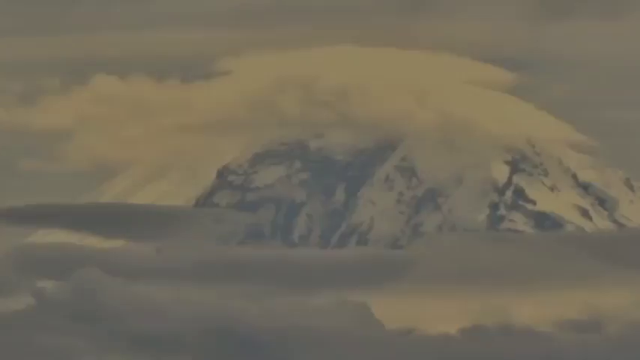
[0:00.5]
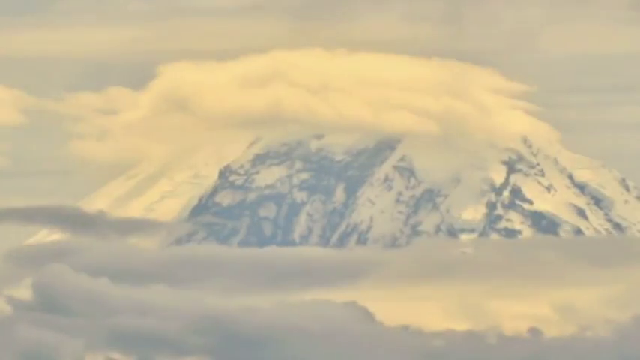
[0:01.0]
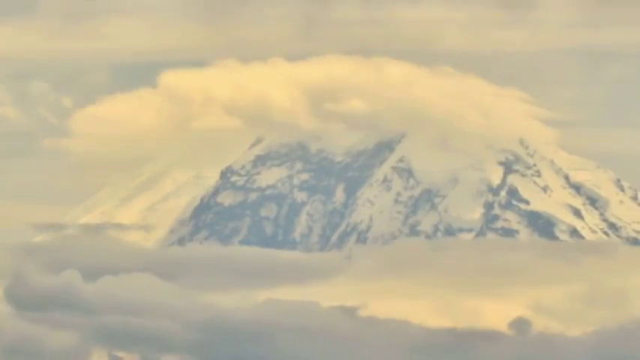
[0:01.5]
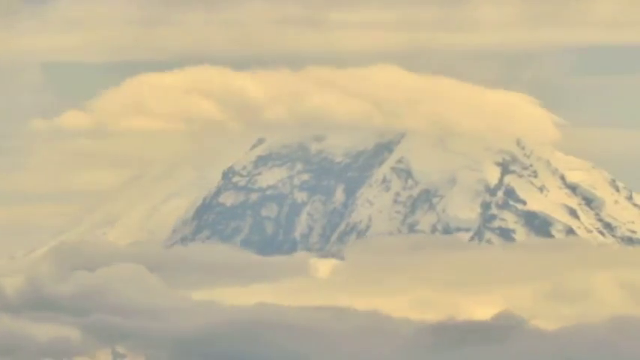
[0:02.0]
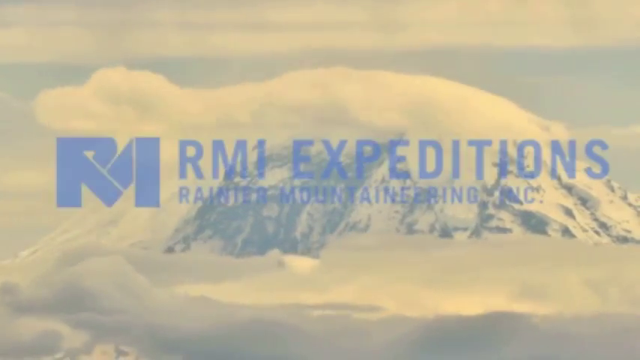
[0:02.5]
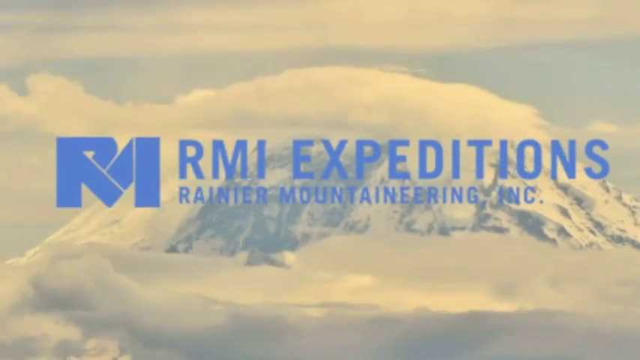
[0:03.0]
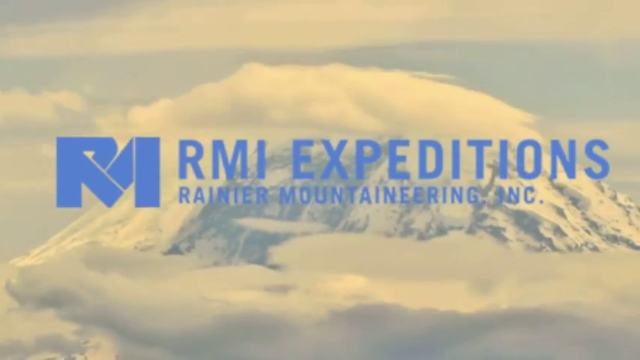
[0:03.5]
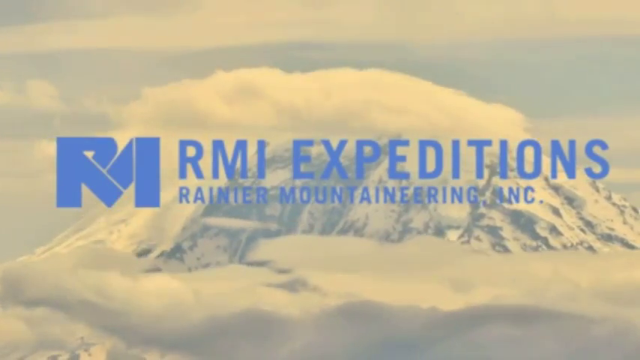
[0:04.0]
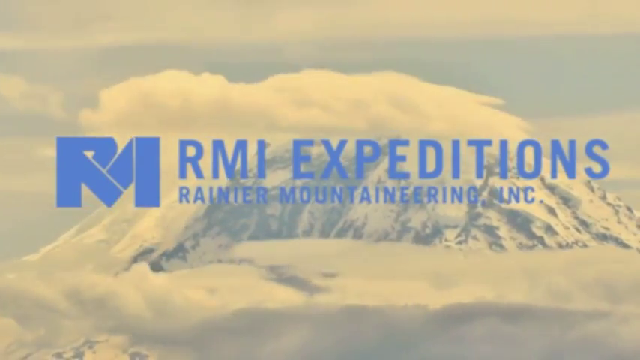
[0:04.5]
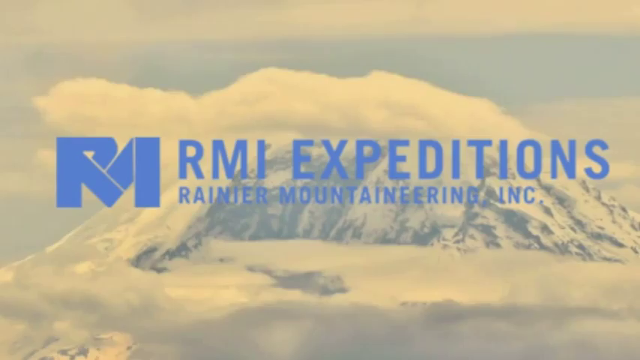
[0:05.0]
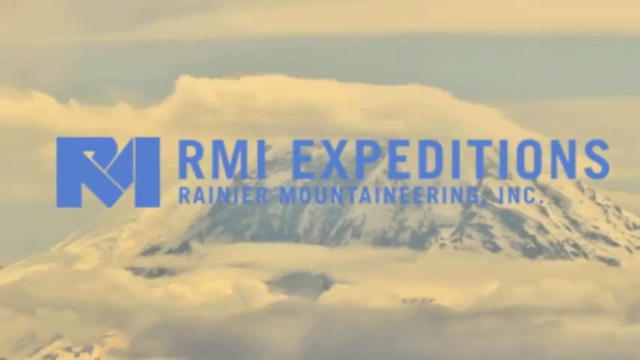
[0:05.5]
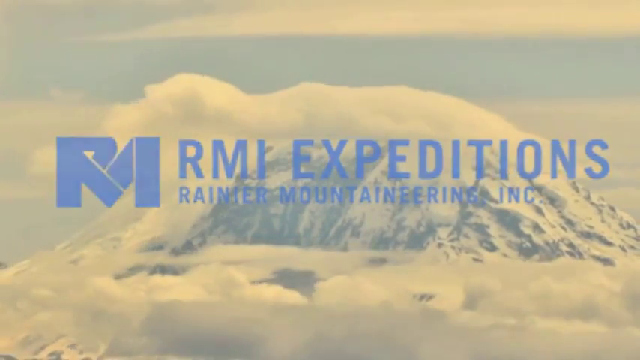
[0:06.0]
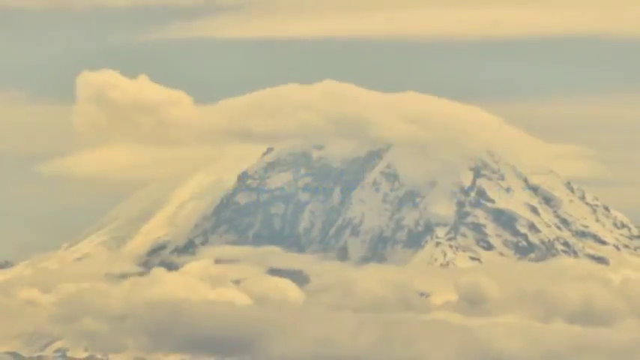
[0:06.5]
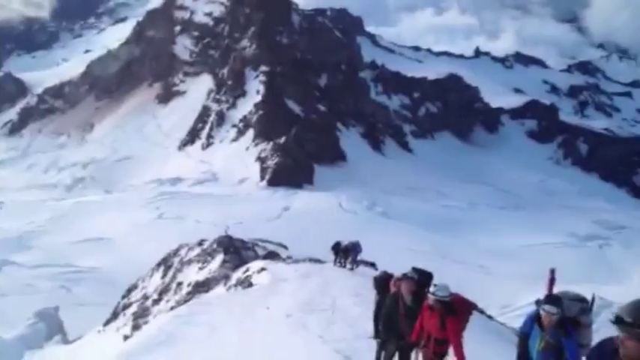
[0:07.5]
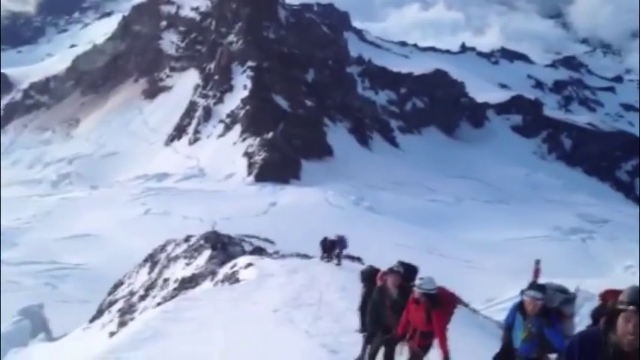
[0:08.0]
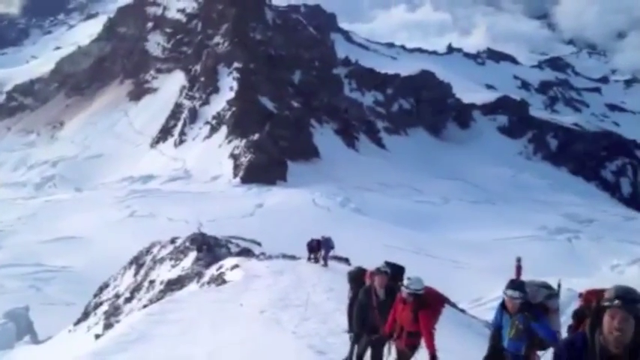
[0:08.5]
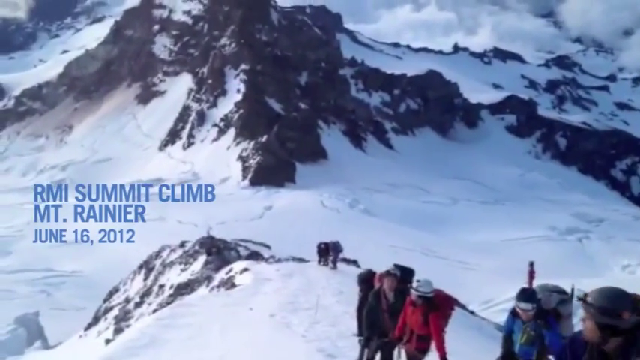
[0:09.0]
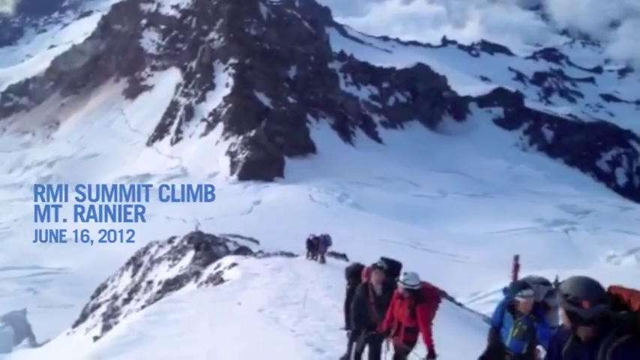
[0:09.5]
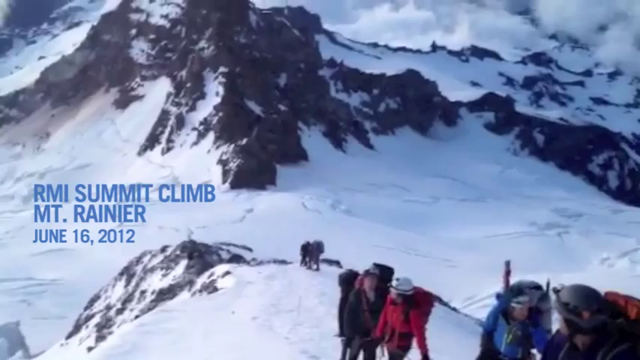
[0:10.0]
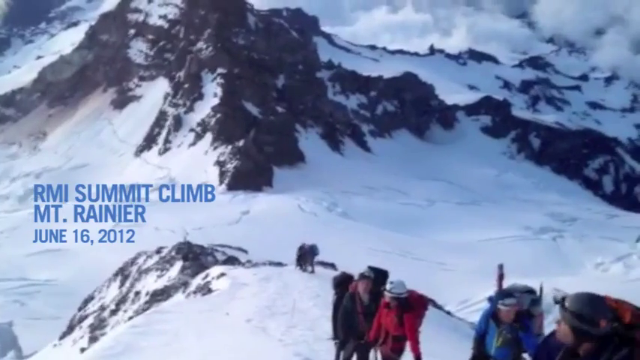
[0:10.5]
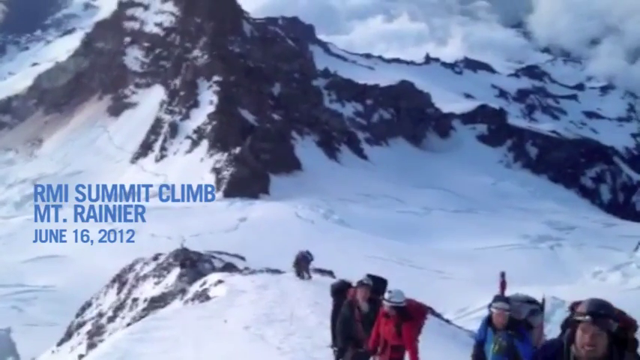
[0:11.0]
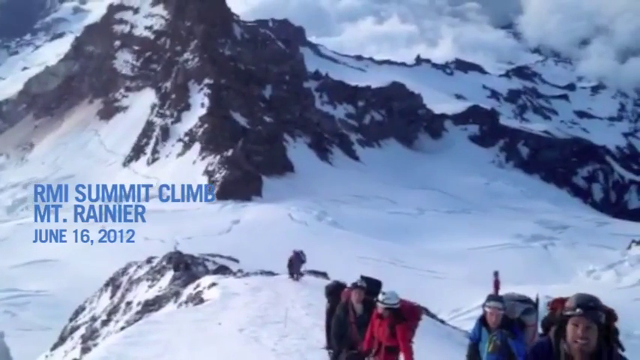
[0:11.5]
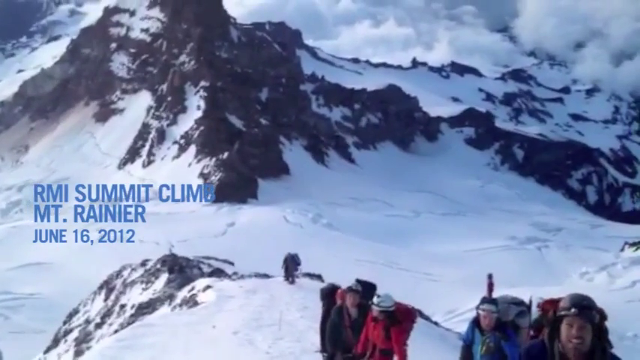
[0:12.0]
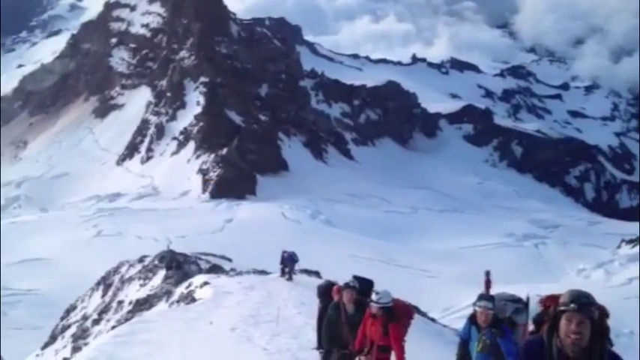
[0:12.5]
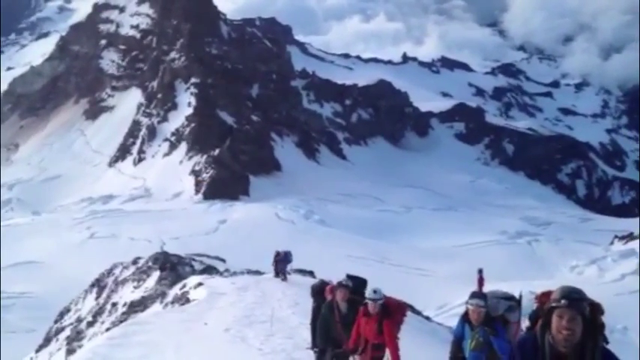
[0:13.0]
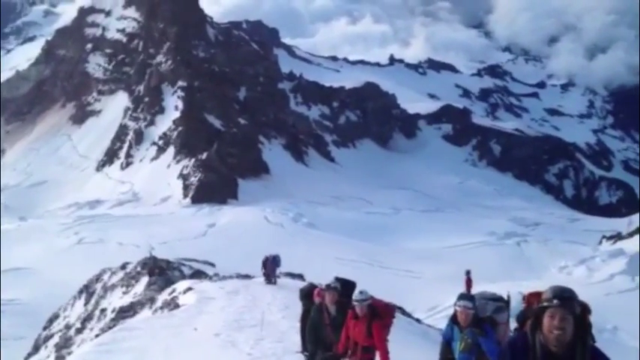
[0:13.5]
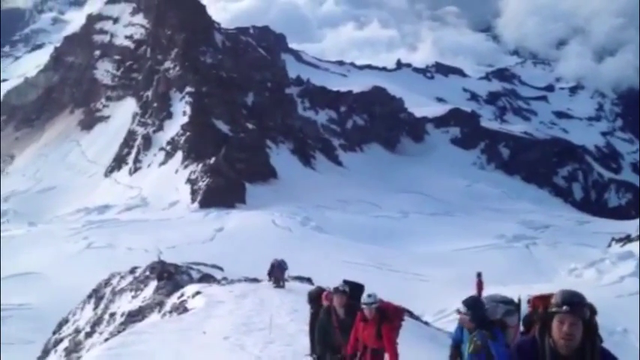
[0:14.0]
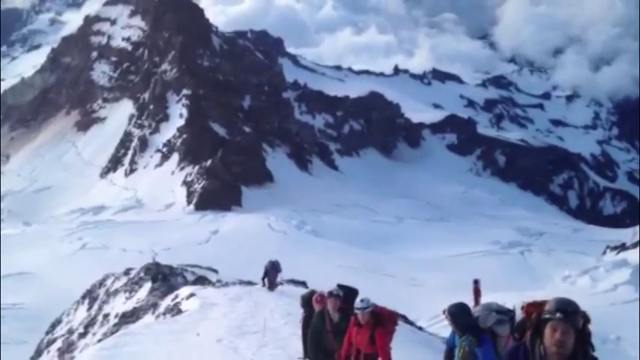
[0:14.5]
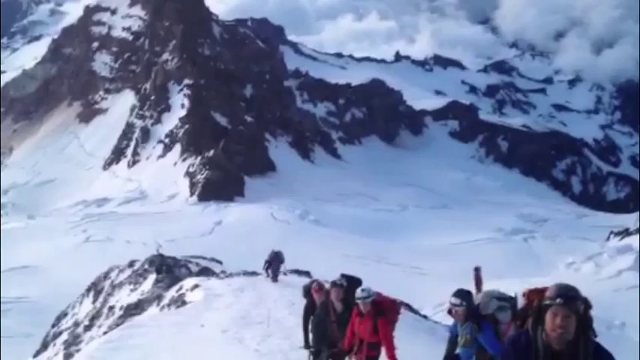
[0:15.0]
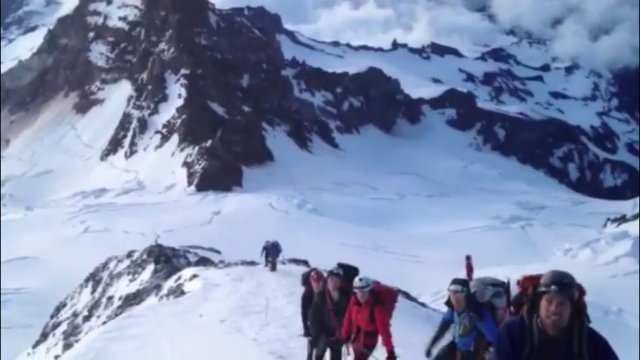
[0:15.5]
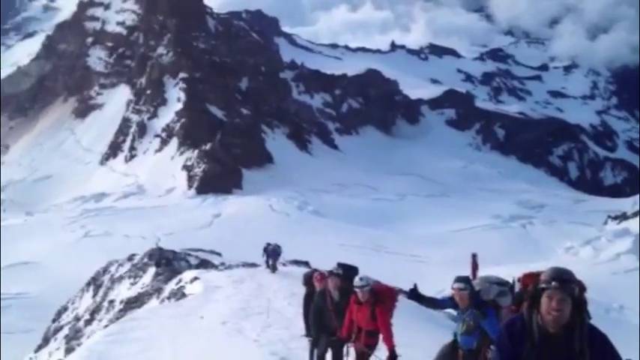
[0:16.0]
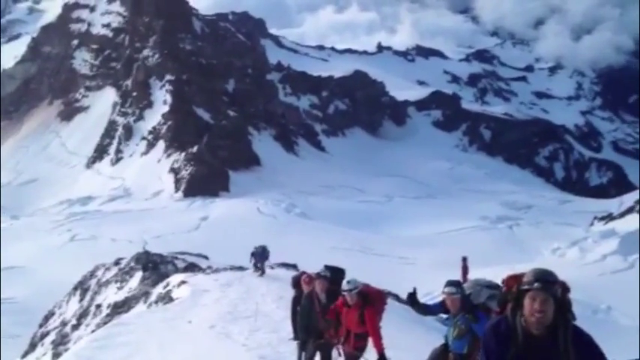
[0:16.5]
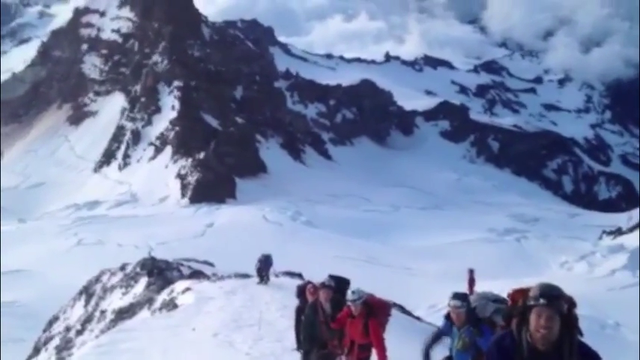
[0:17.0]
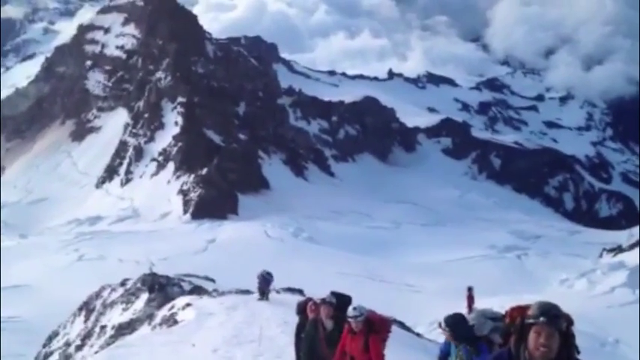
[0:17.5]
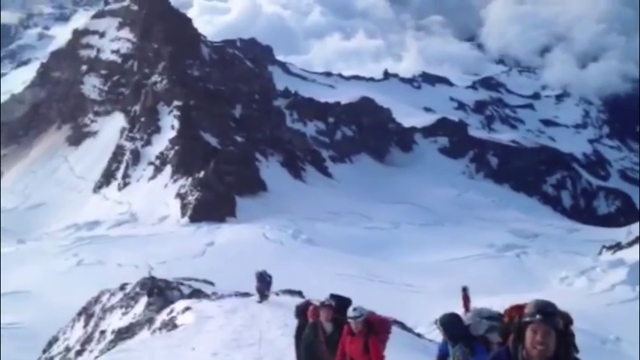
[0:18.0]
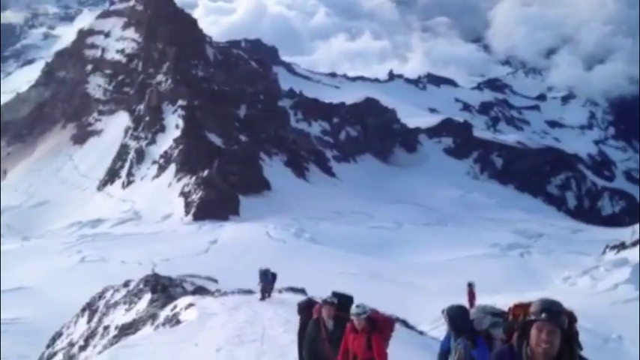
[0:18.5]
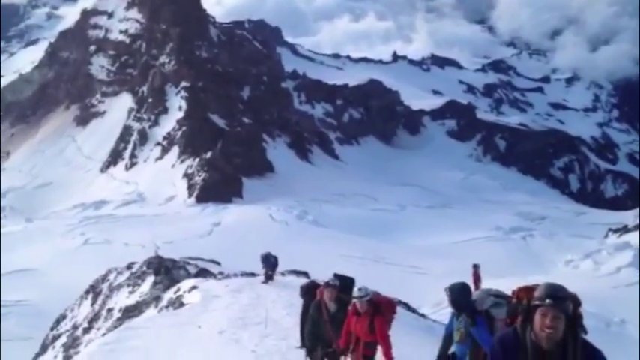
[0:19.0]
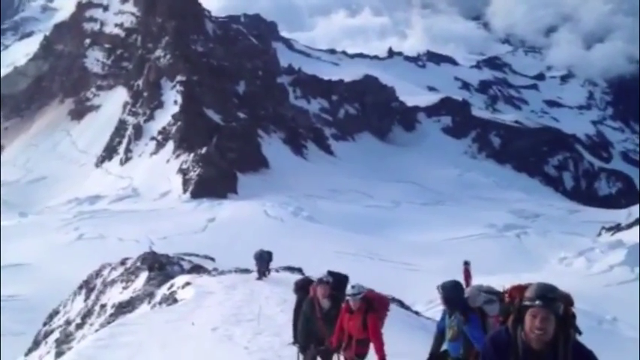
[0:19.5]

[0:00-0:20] The video opens with an introduction showing a mountain in the distance with clouds moving about it, and a title, "RMI Expeditions," appears; what is apparently Rainier Mountaineering Incorporated is shown across the screen below it. The shot then shows a camera shaking a little, probably because of the wind and altitude. The camera on a mountain films people in two small groups, with a few people in each group, and a massive snow-covered mountain behind them. On the left-hand side, text reads "RMI summit climb Mount Rainier June 16 2012." The sky is clear with some clouds, and it is bright out. Down below there is some movement: a person moves their hand a little, apparently trying to direct people. It is very windy.